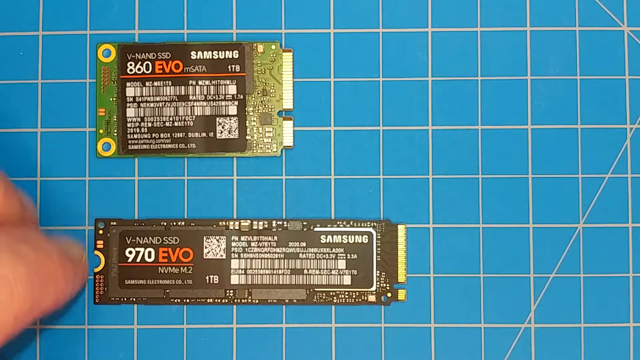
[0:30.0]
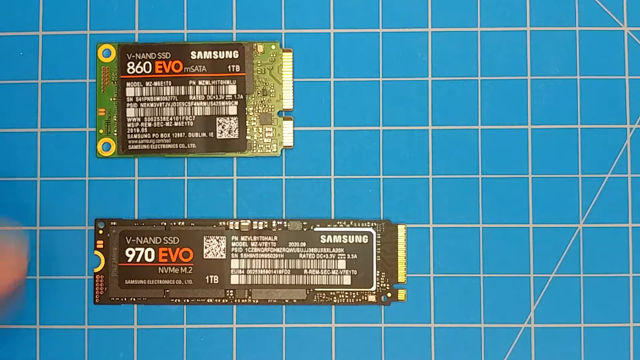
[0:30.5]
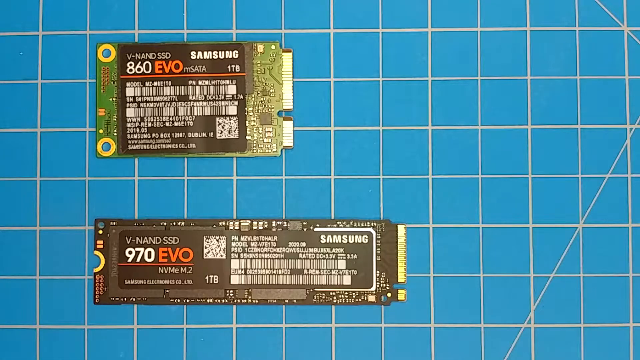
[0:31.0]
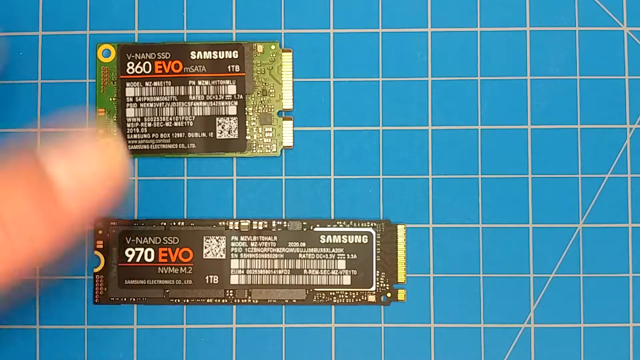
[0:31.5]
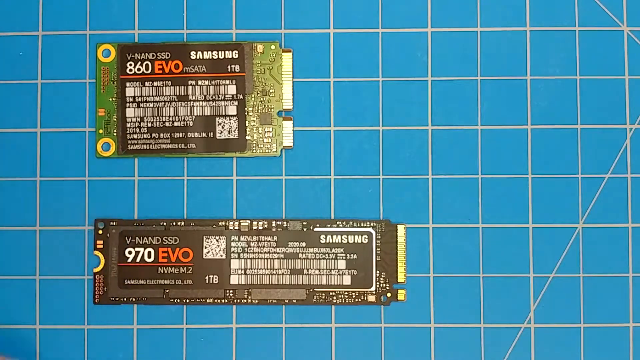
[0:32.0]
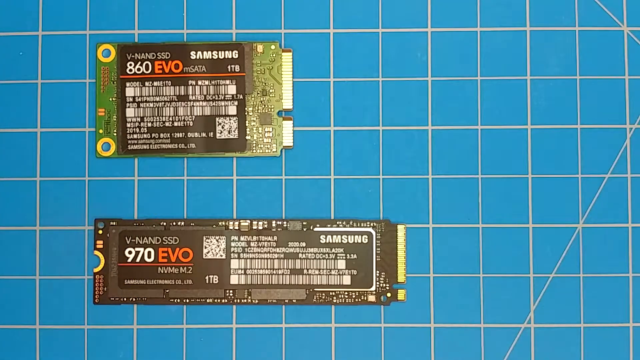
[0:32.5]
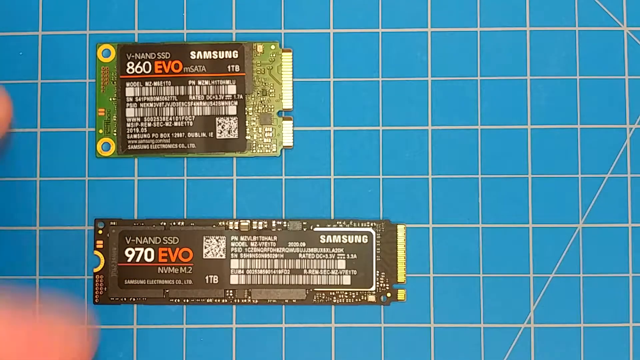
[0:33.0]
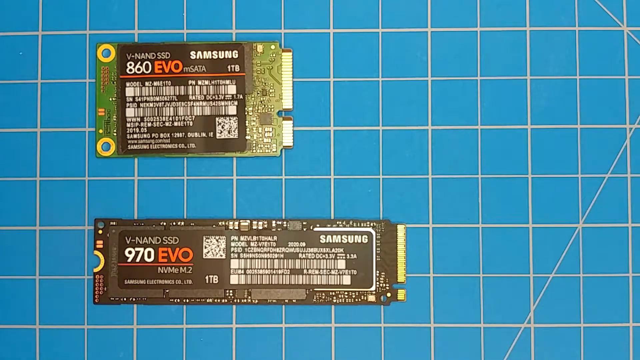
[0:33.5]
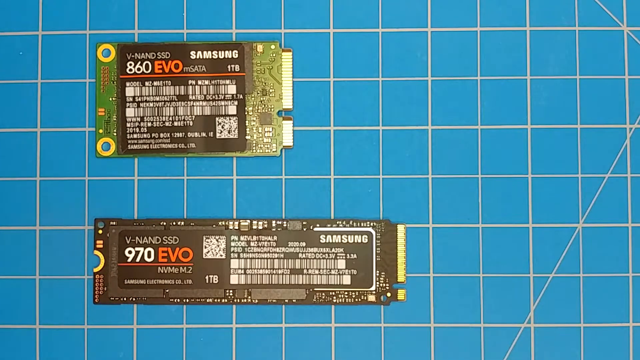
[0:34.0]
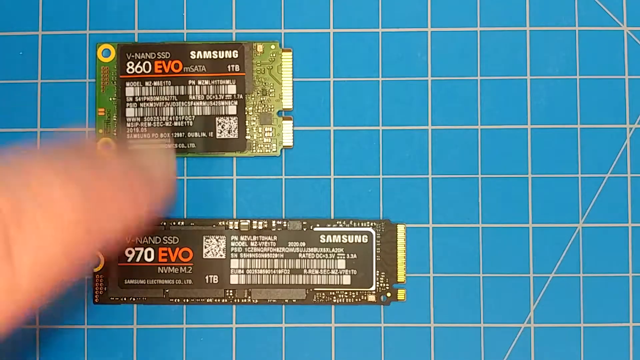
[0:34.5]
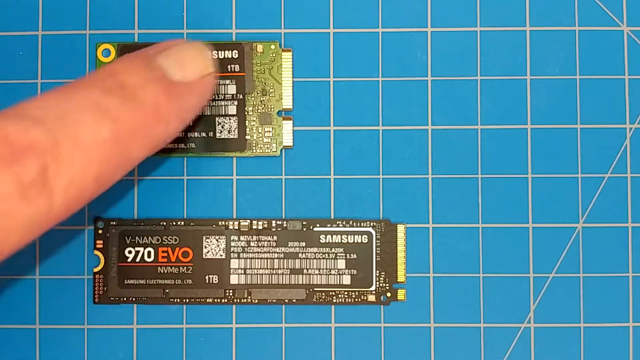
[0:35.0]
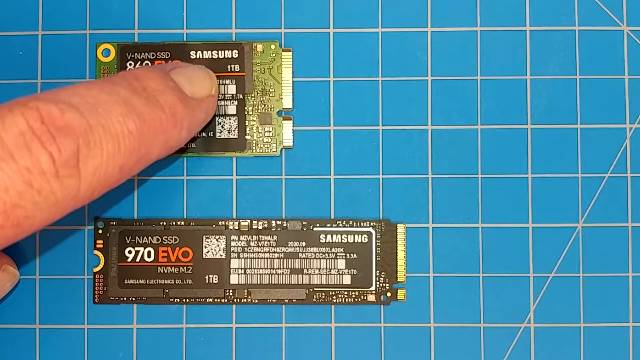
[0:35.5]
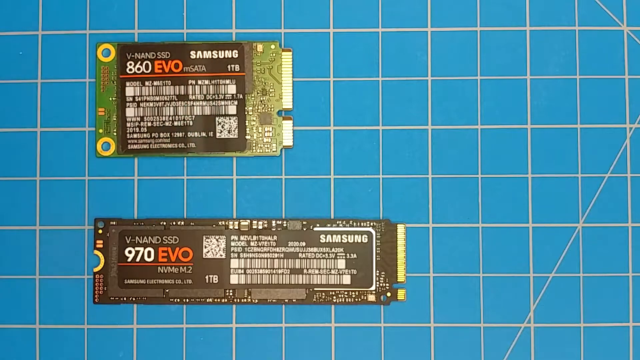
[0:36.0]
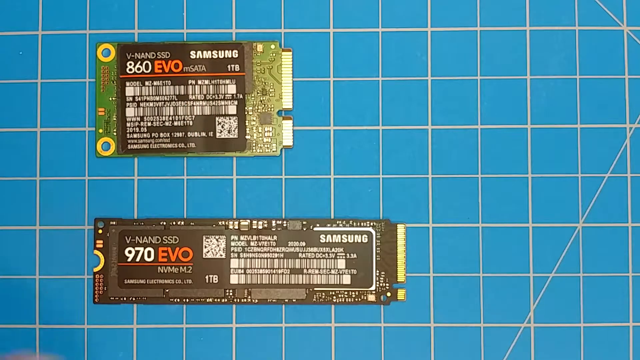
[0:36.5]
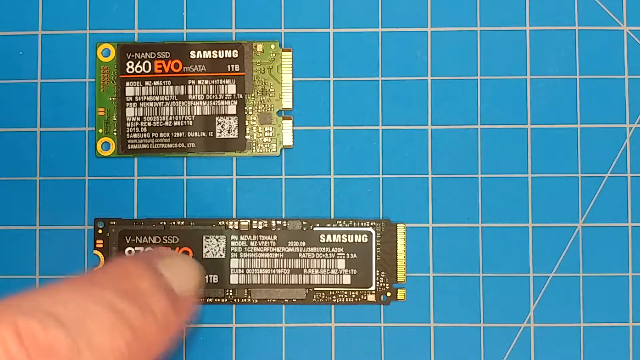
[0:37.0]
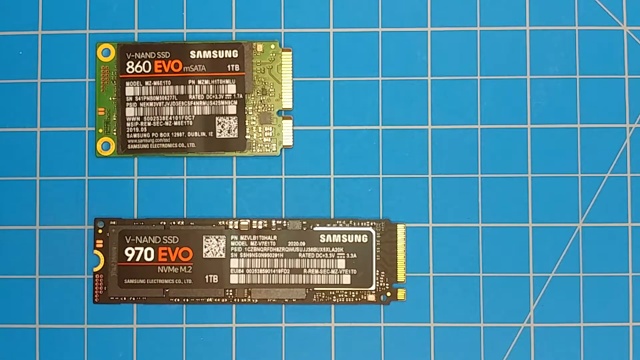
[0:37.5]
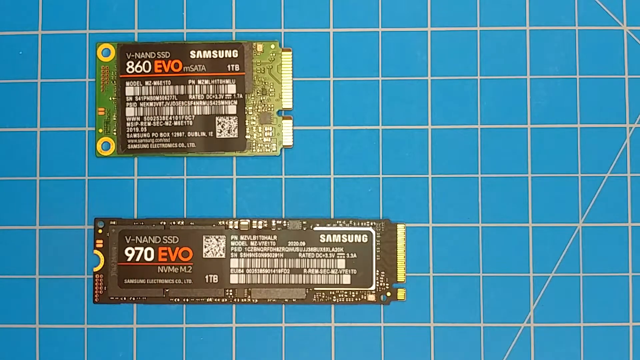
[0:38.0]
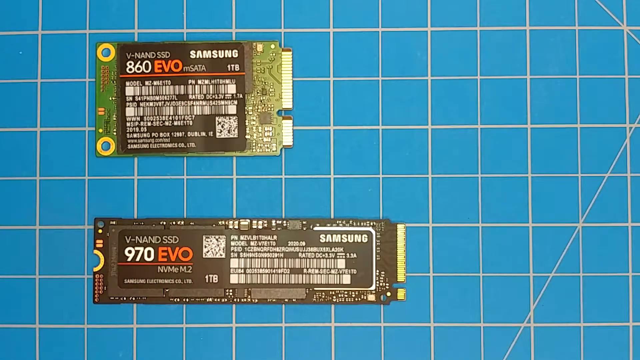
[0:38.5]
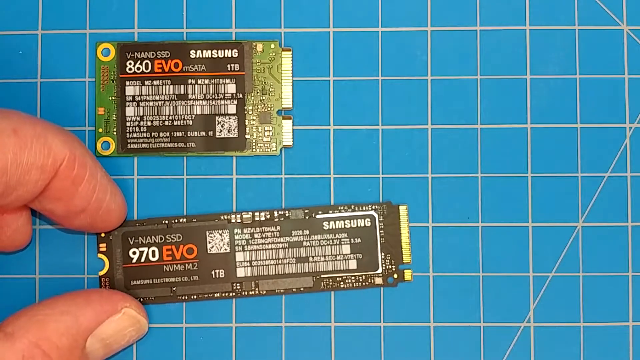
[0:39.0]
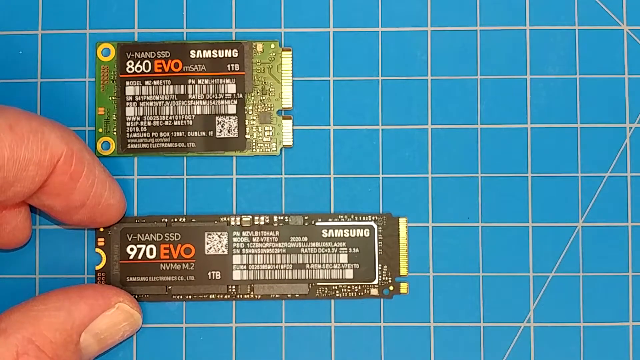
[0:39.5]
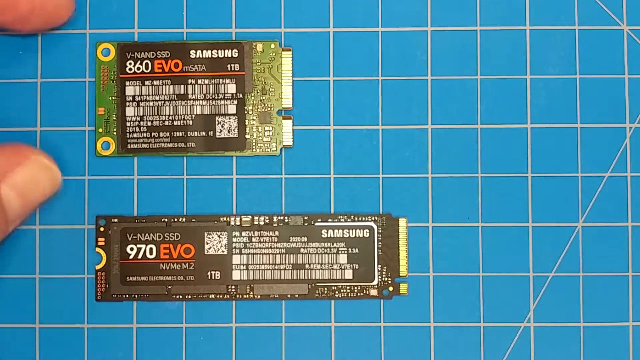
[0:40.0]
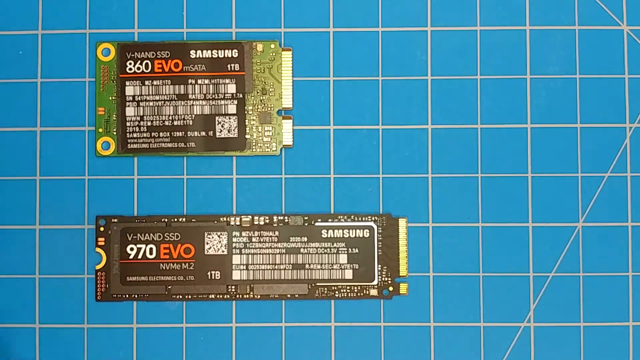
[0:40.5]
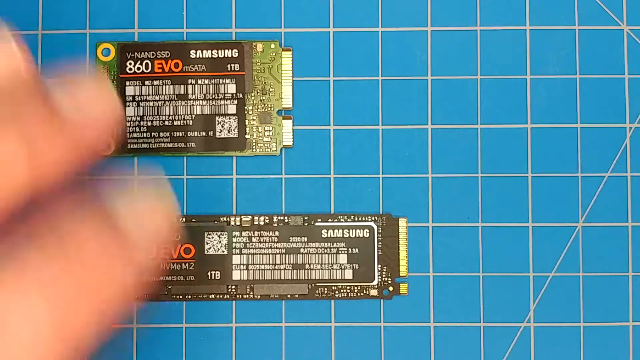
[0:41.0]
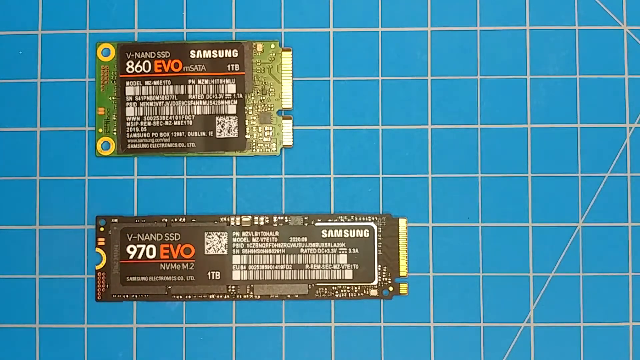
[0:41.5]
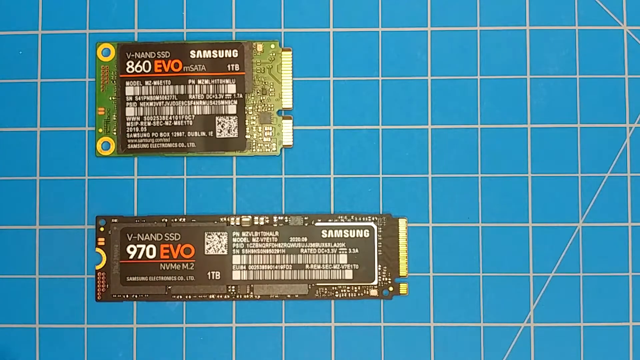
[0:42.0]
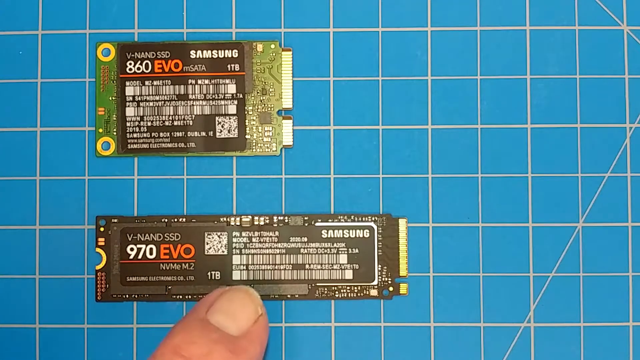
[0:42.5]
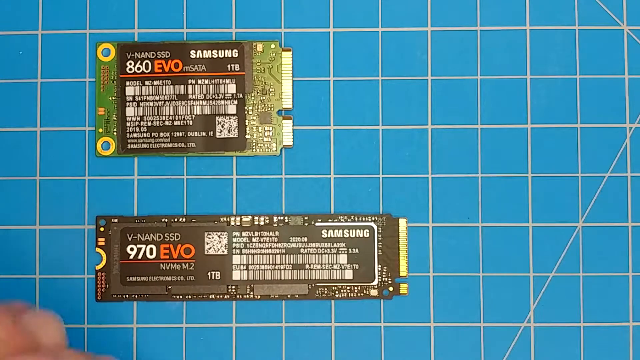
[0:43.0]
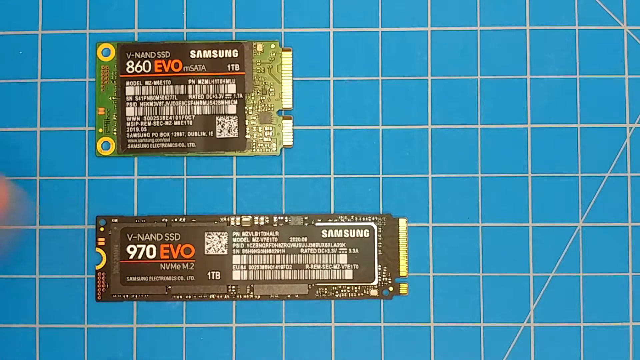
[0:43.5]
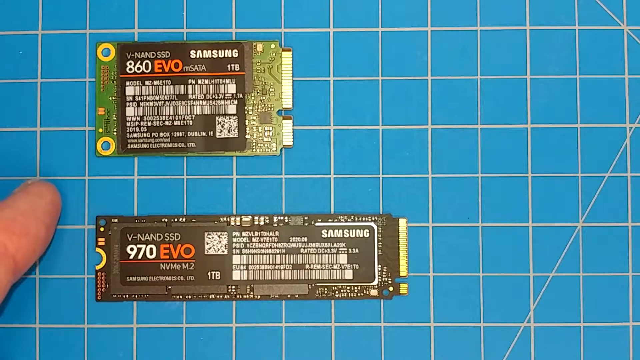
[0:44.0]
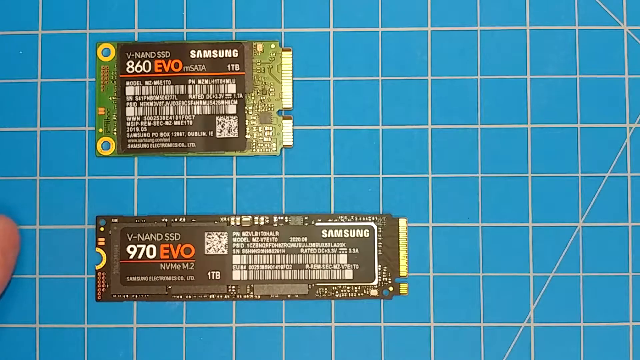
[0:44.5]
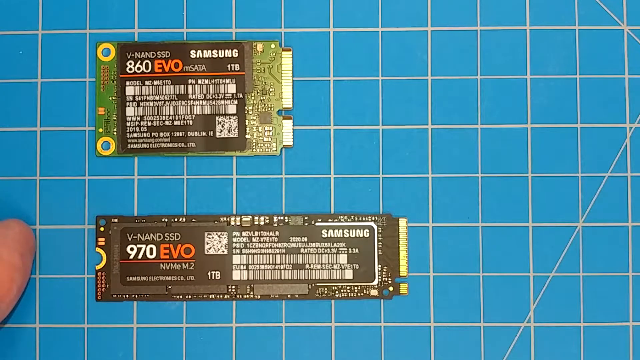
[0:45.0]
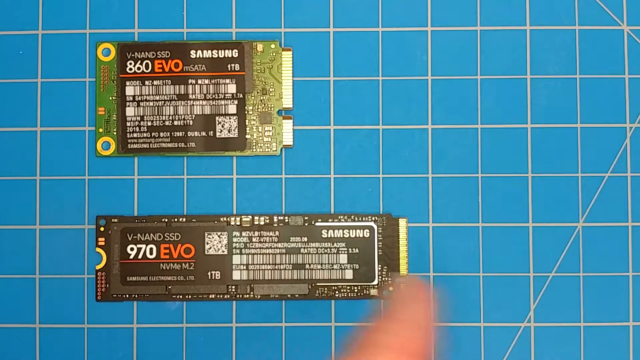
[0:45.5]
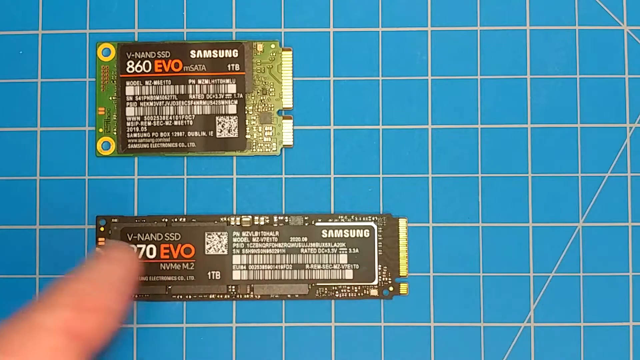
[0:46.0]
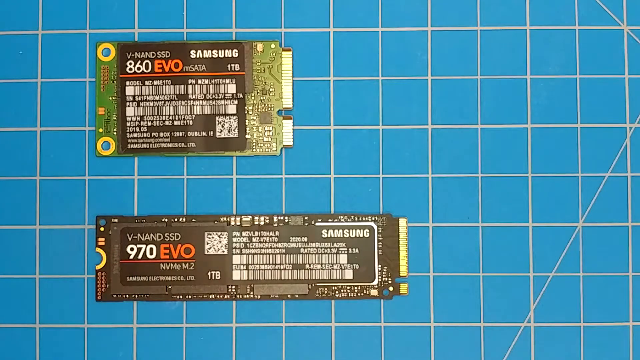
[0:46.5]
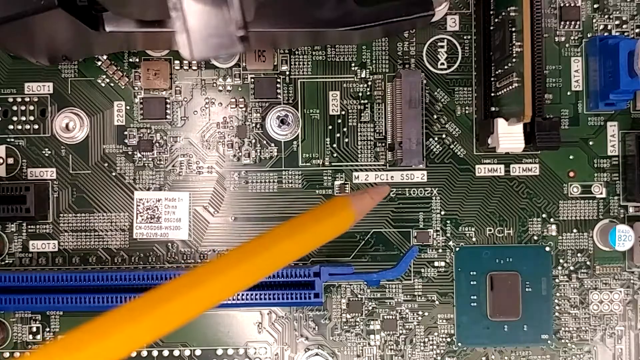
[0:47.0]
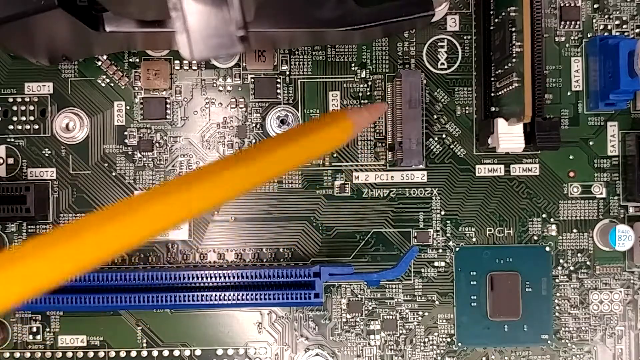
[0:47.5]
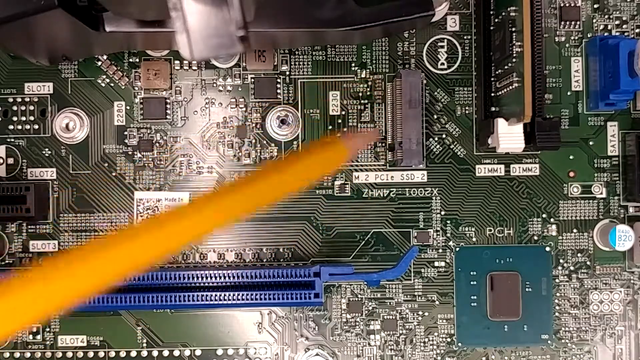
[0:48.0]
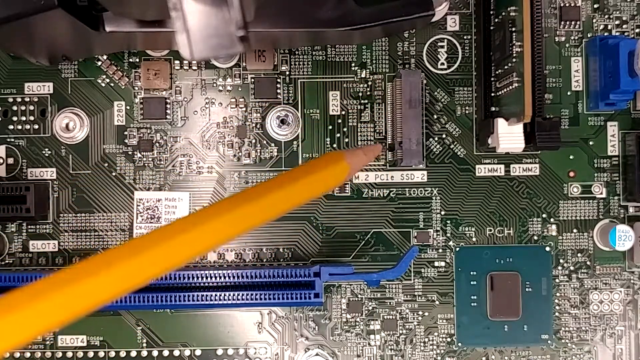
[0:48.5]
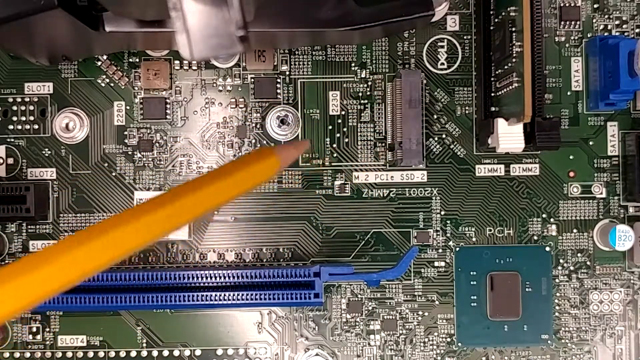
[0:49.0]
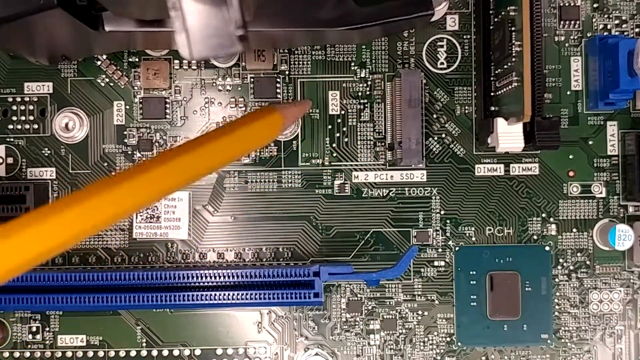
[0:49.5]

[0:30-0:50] A person appears to be reviewing two chips, which are small, as the person's finger looks extremely large next to them. The chips are laying on very small blue tiles separated by white seams. The person is still touching each chip briefly. The view then pans over to a Dell board, maybe a motherboard. The person has a regular yellow pencil of the kind that is sharpened and seems to point around the circuitry area, not at anything specific, possibly at an area that may house one of these chips. Other random circuitry populates the board everywhere.